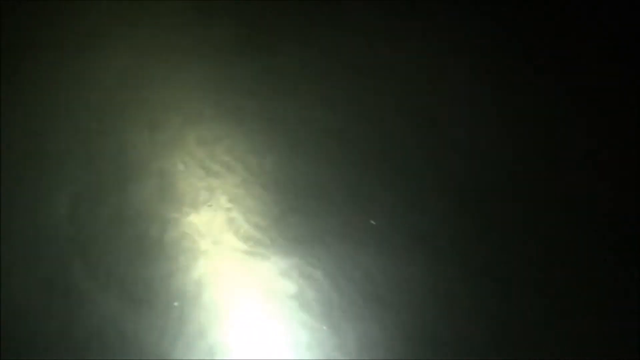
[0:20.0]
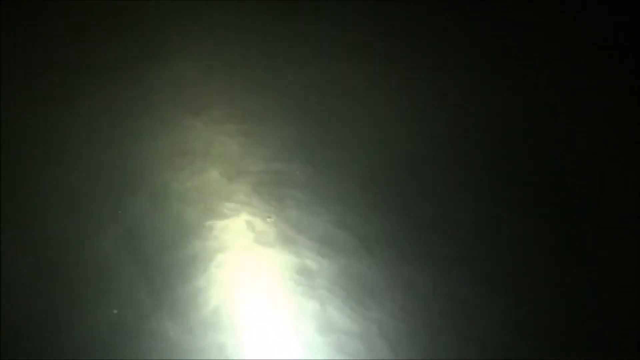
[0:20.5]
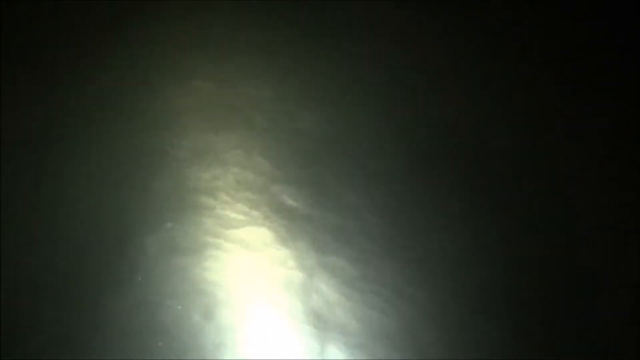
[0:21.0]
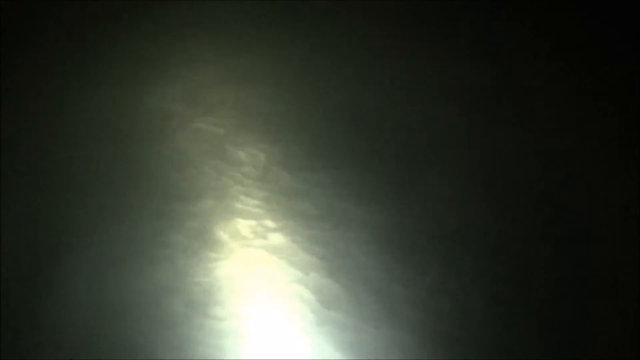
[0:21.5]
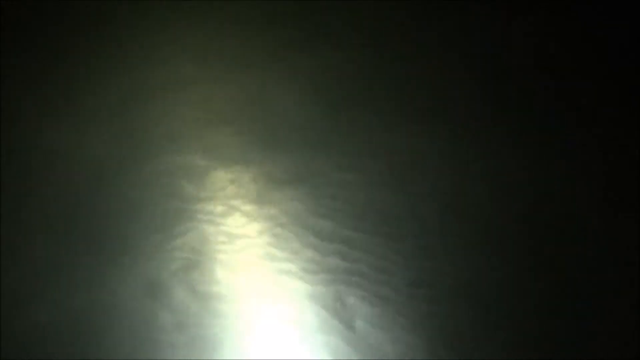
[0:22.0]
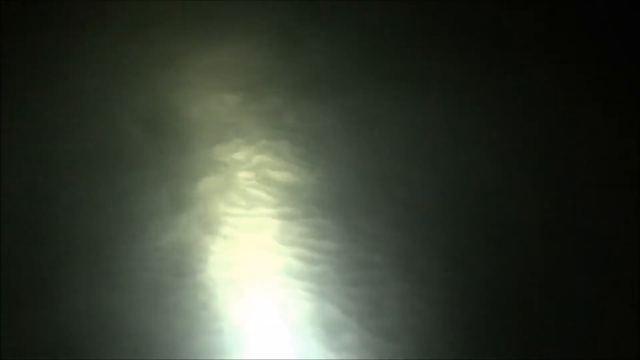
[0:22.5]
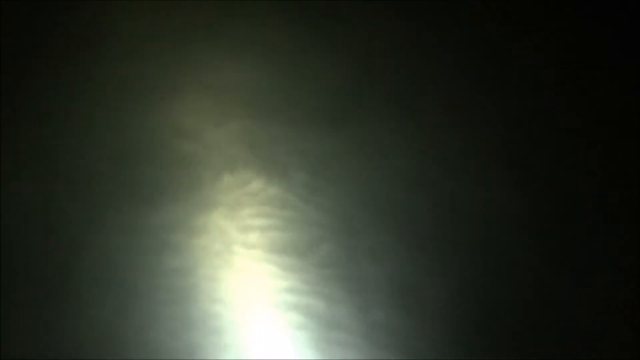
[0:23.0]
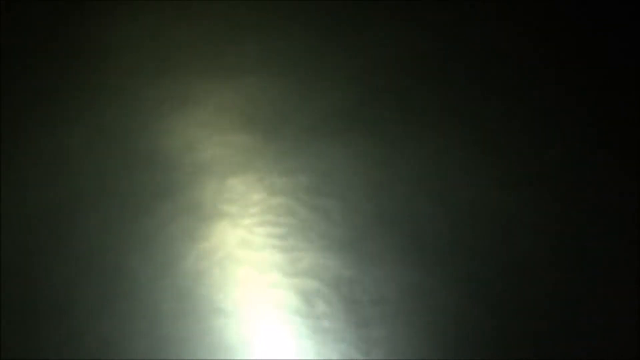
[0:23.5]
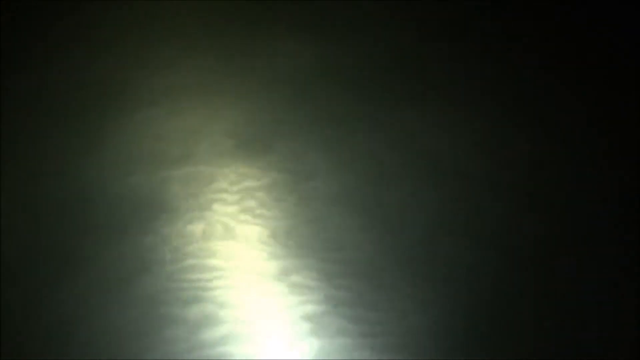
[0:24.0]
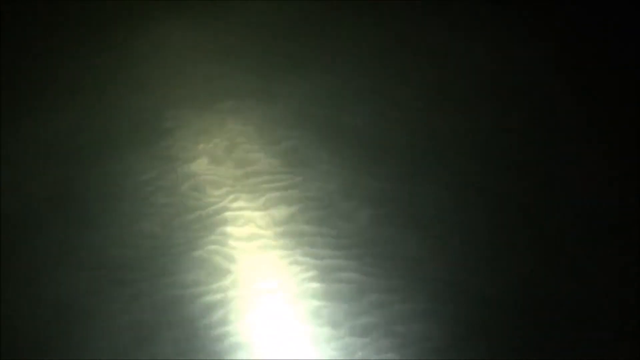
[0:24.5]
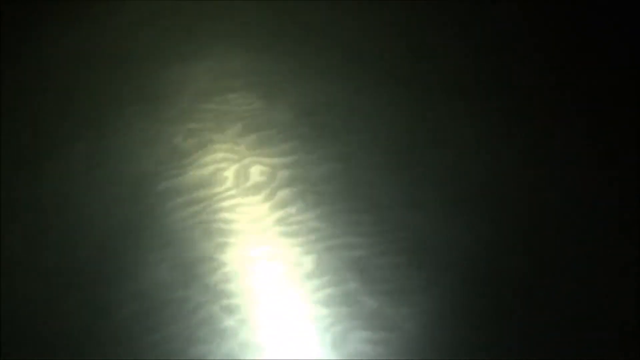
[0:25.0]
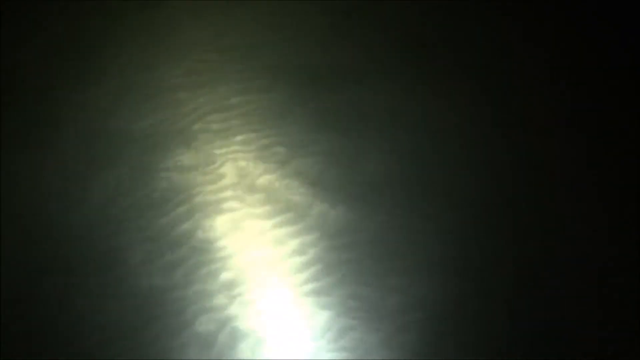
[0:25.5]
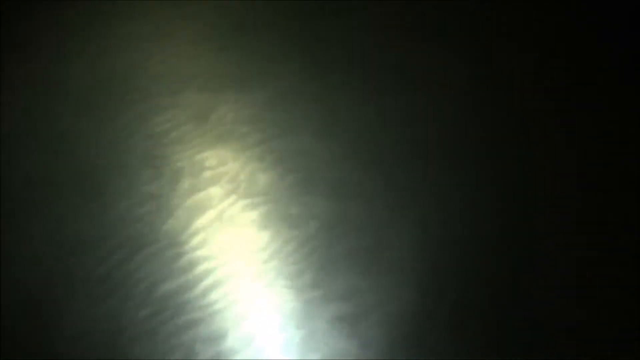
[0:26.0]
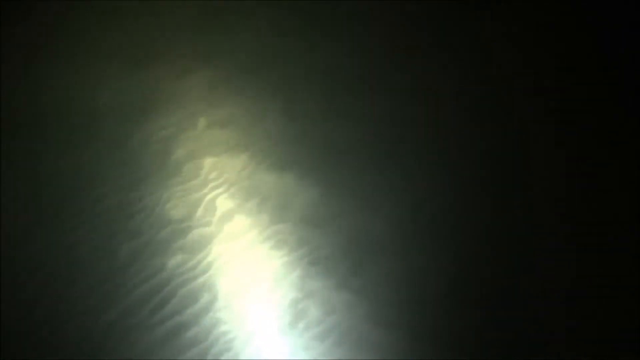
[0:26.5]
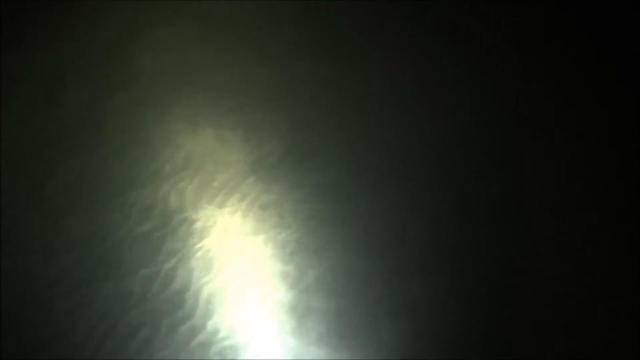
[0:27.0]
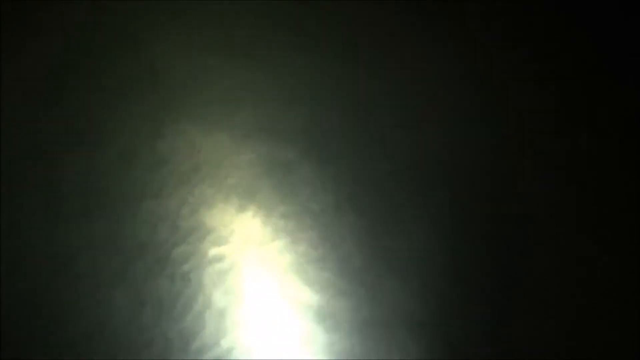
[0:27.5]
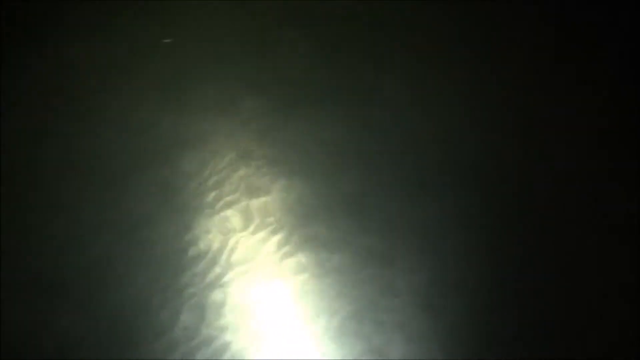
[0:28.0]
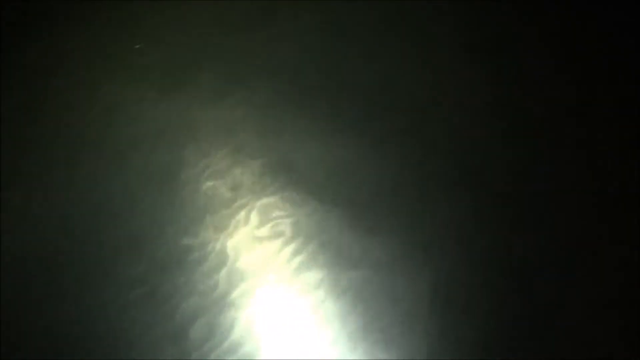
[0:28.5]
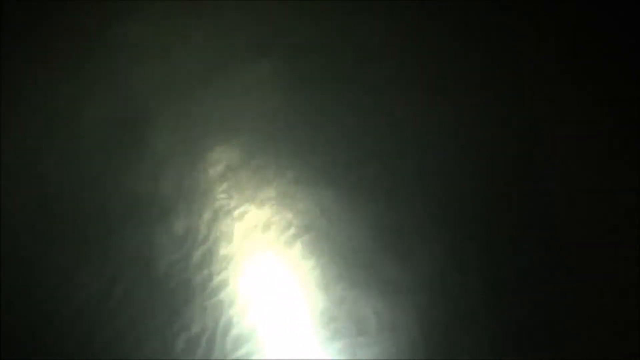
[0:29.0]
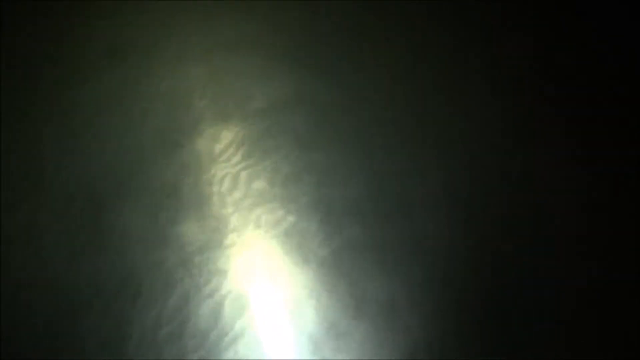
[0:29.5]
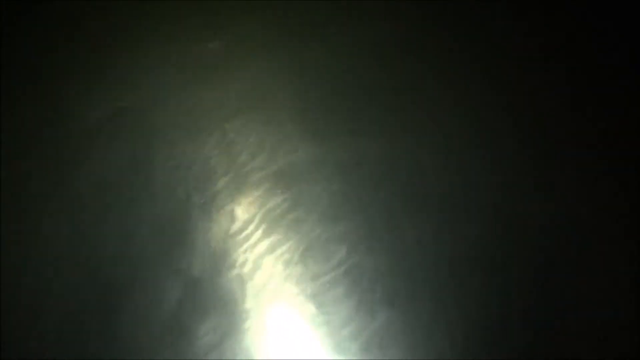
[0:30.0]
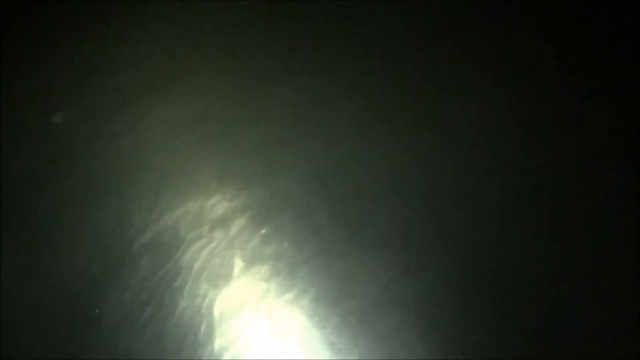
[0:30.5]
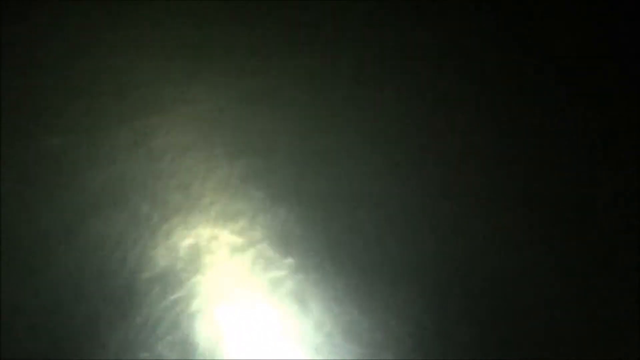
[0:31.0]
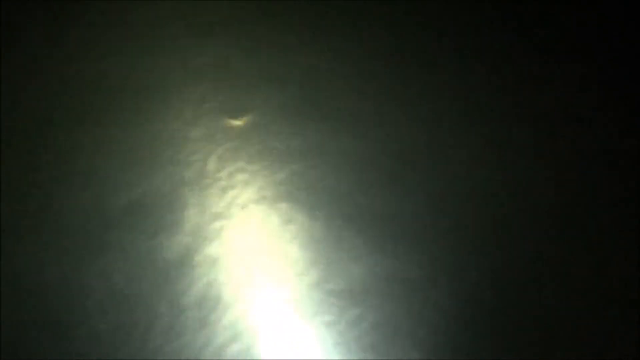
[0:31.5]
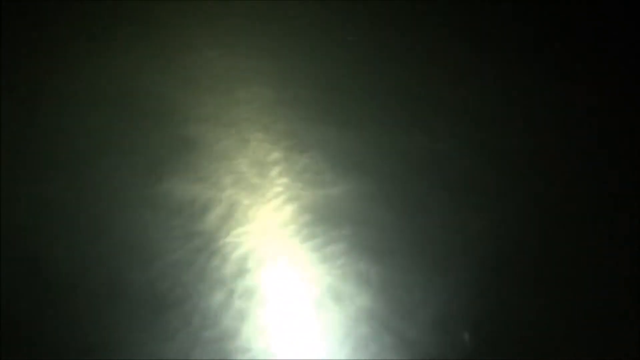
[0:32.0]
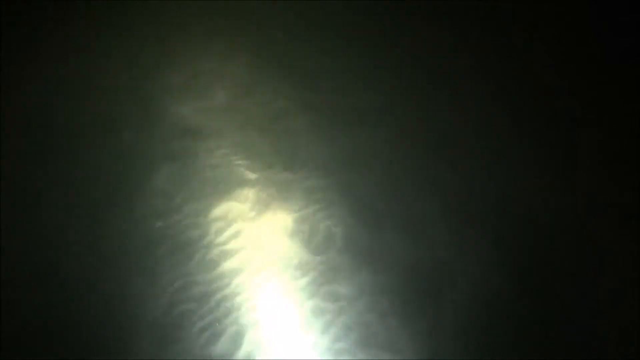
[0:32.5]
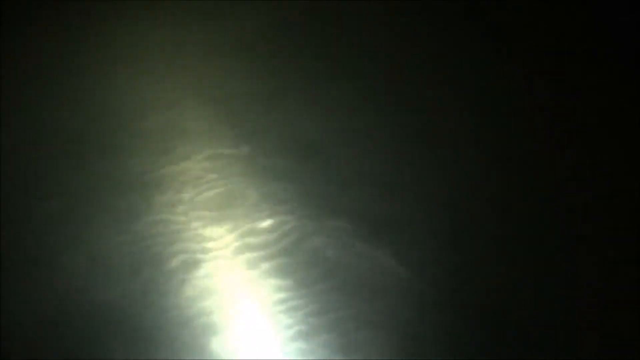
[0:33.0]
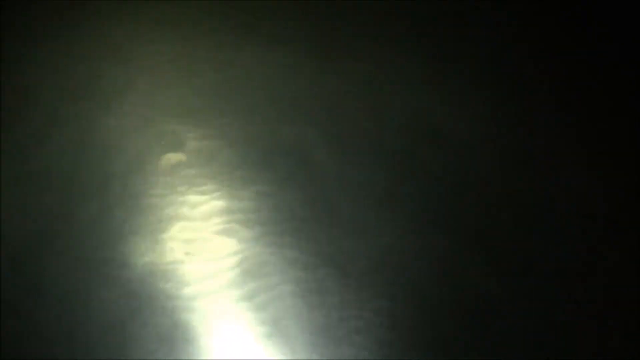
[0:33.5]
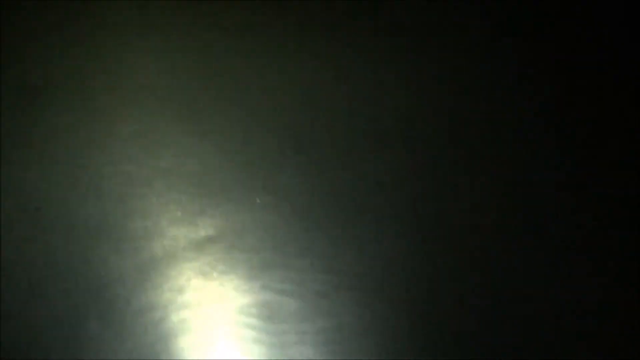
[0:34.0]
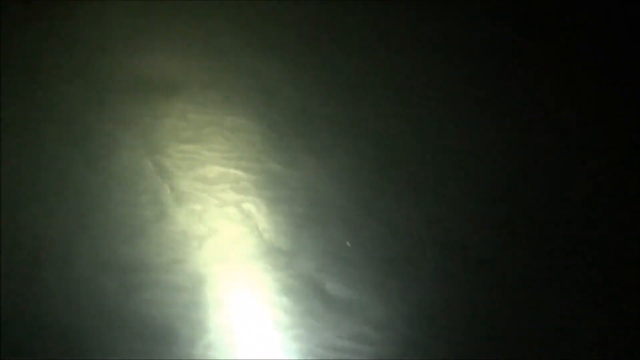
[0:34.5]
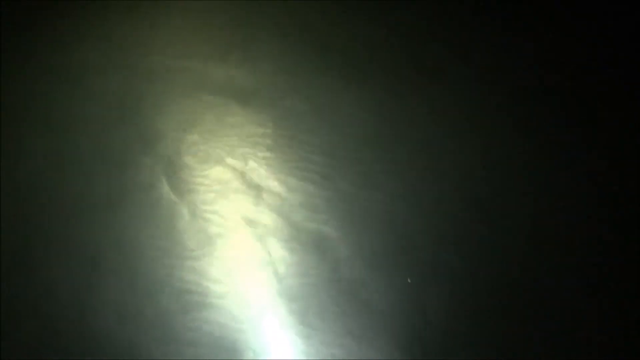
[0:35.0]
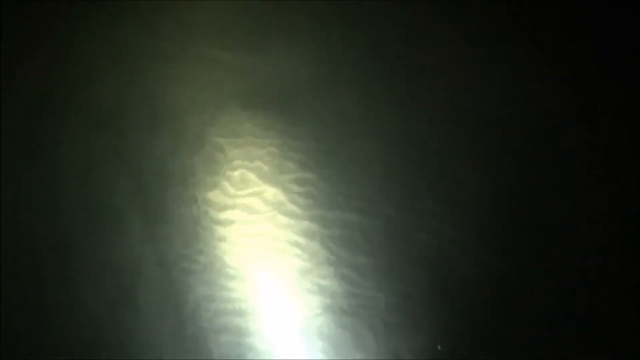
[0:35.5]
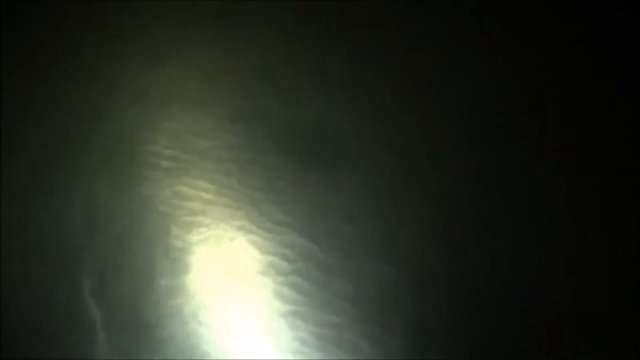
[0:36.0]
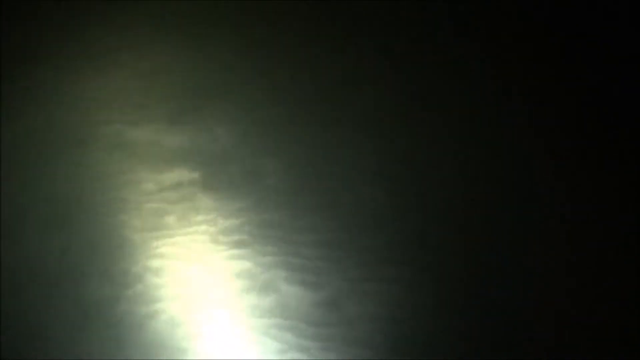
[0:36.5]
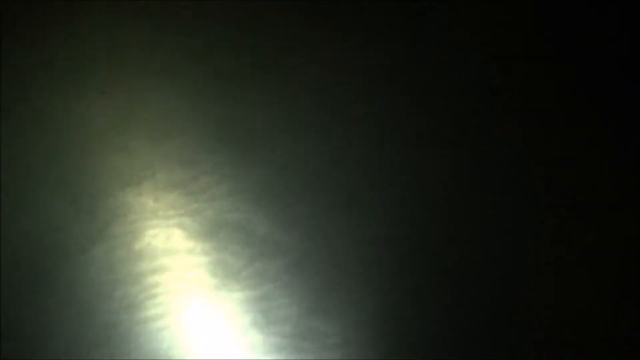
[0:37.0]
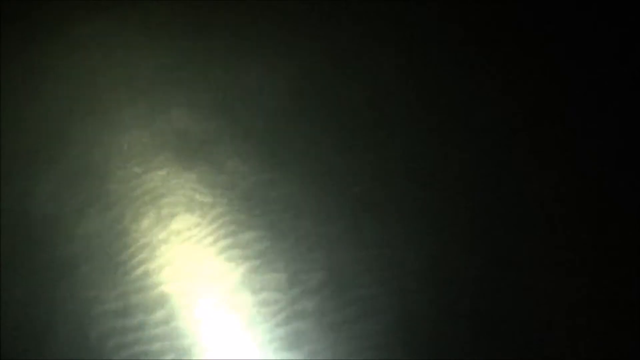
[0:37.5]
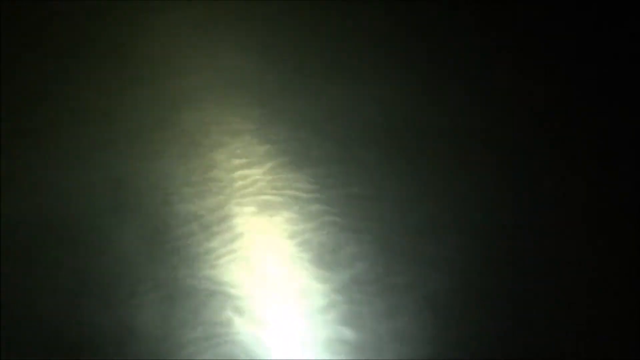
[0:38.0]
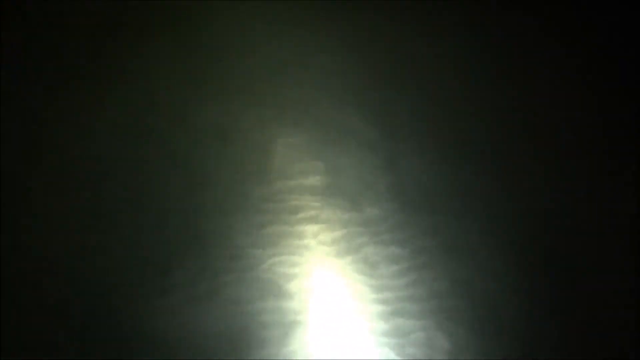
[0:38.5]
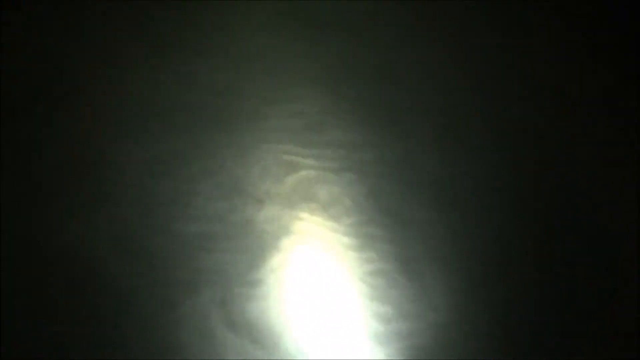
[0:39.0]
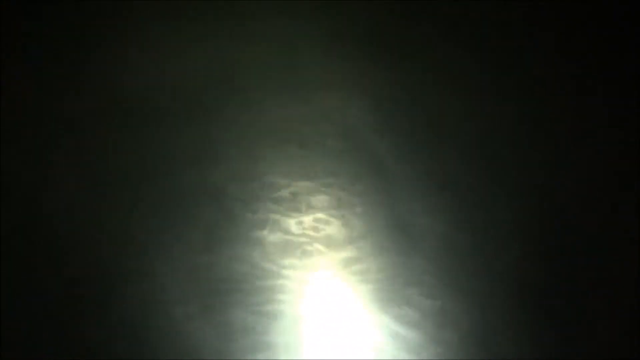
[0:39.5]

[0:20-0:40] The body of water continues to be recorded at night, illuminated by a lamp, with the light shining on it from one side.